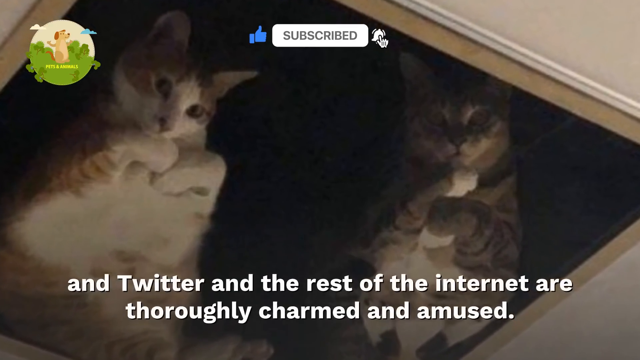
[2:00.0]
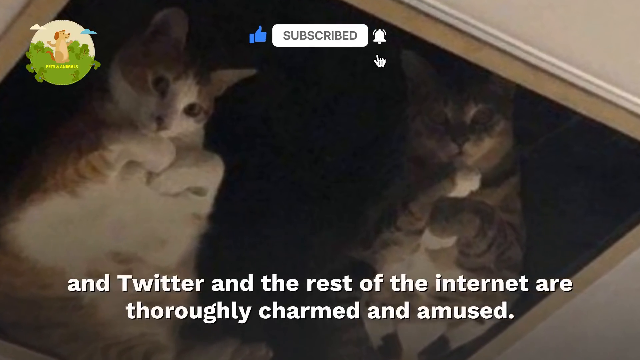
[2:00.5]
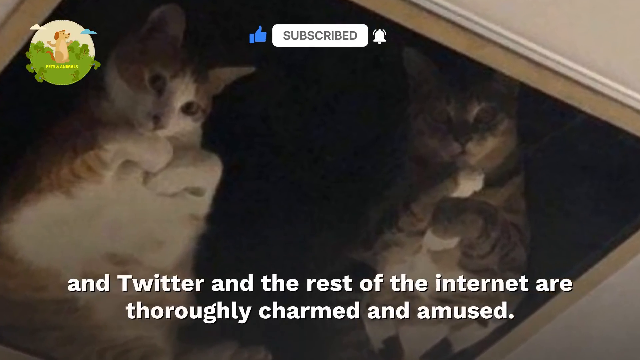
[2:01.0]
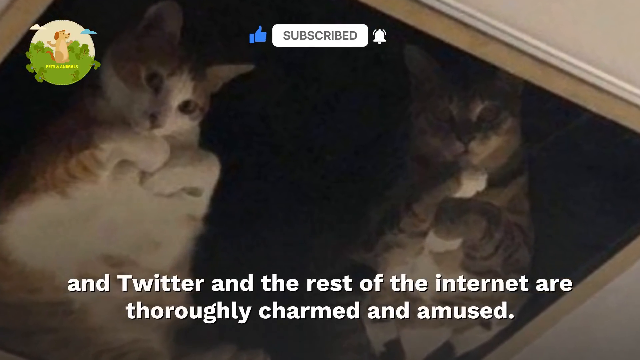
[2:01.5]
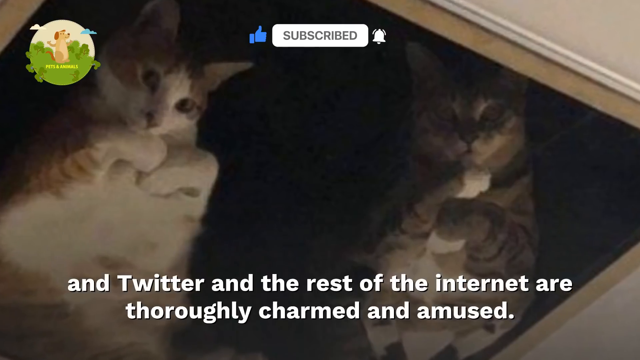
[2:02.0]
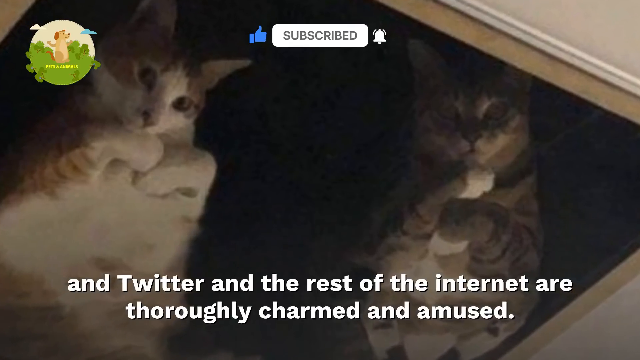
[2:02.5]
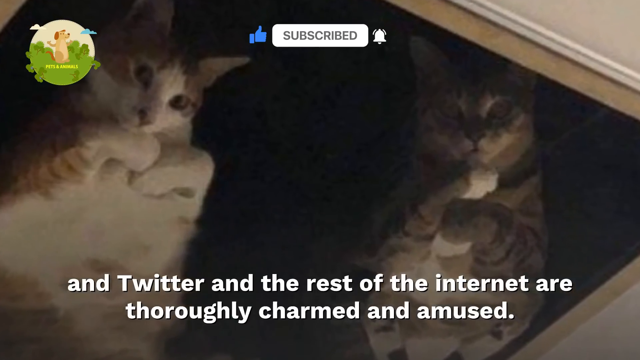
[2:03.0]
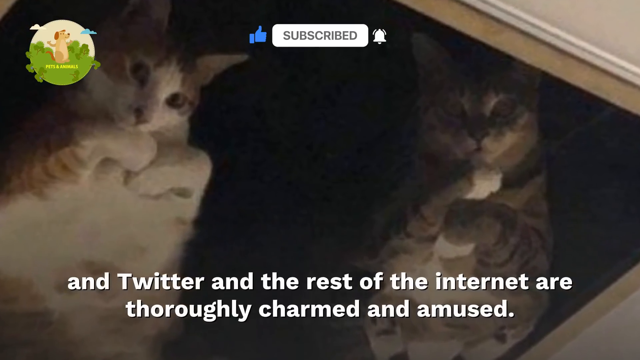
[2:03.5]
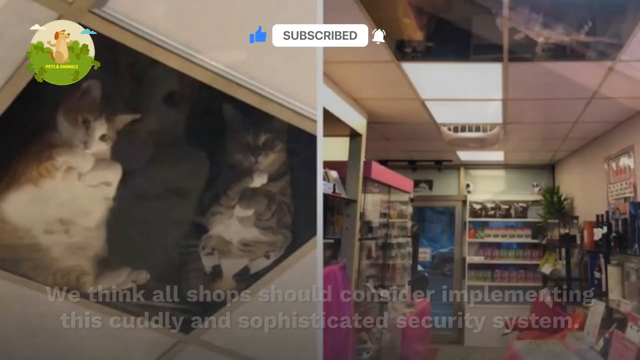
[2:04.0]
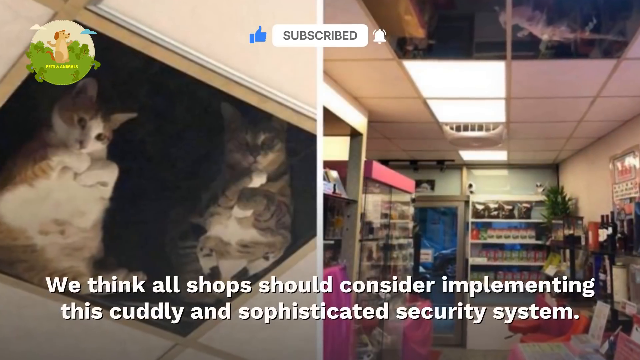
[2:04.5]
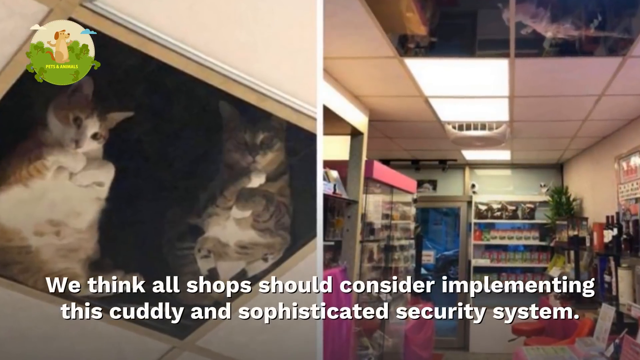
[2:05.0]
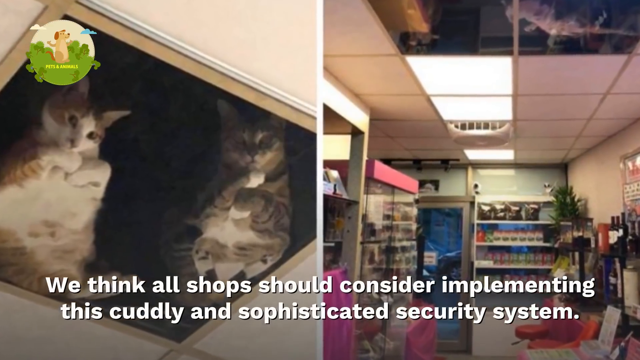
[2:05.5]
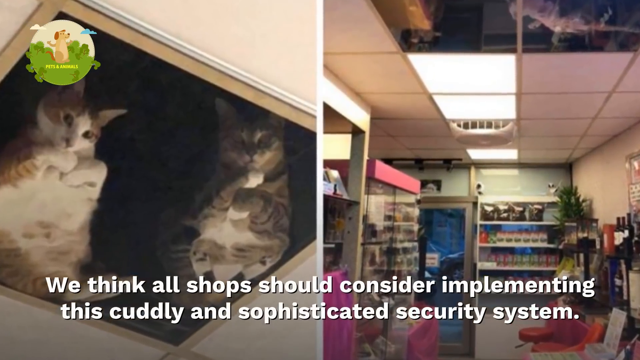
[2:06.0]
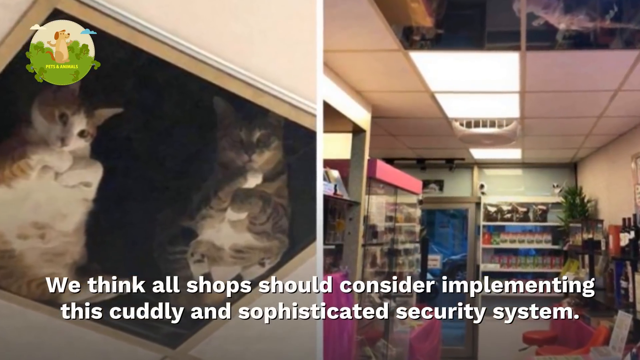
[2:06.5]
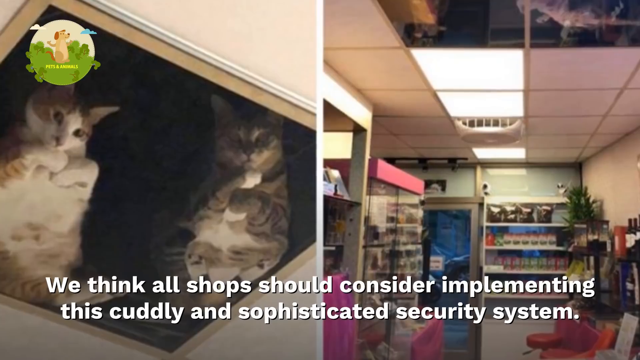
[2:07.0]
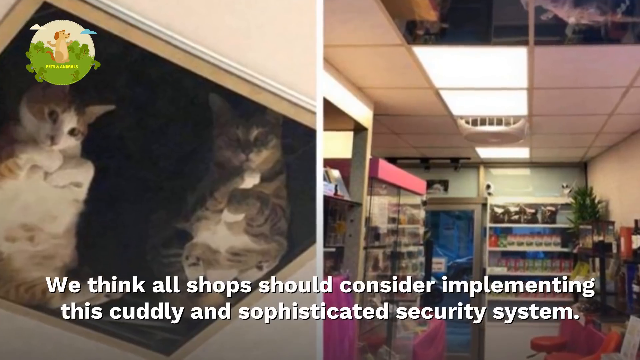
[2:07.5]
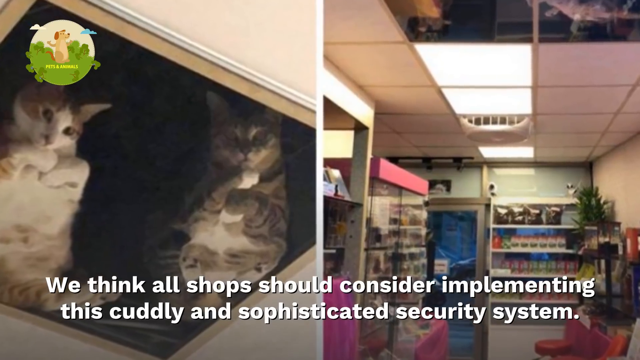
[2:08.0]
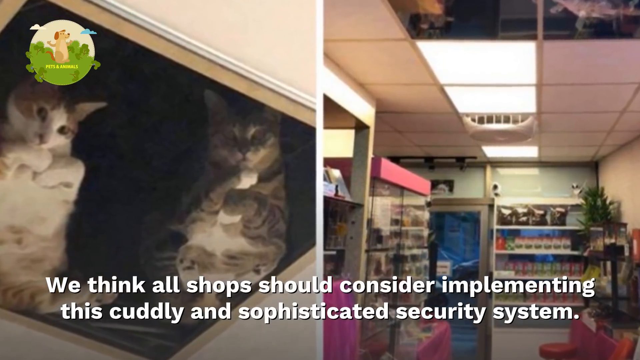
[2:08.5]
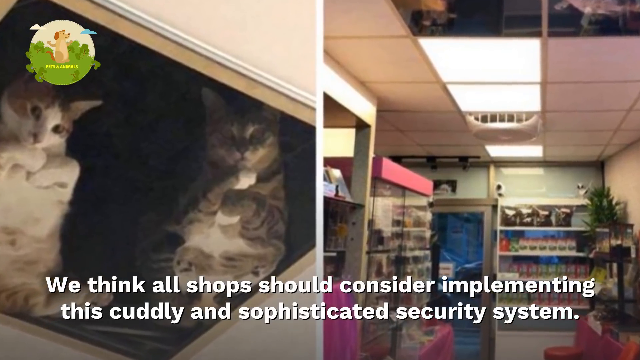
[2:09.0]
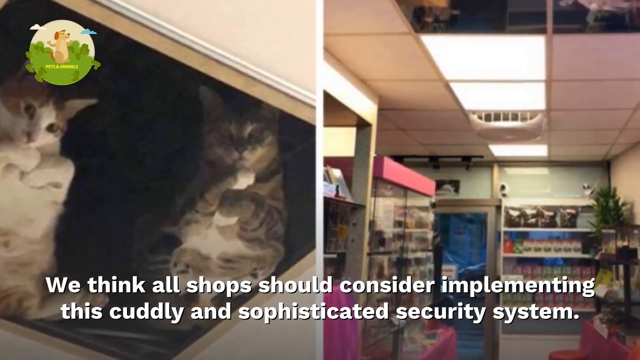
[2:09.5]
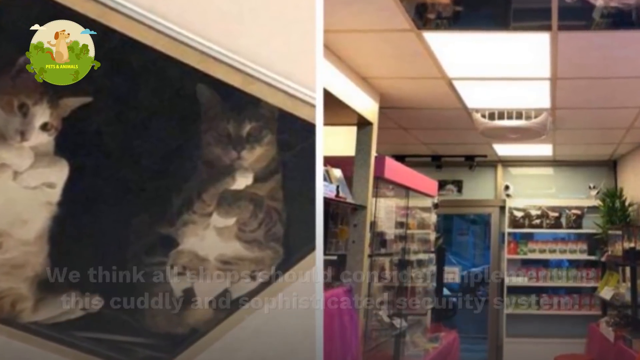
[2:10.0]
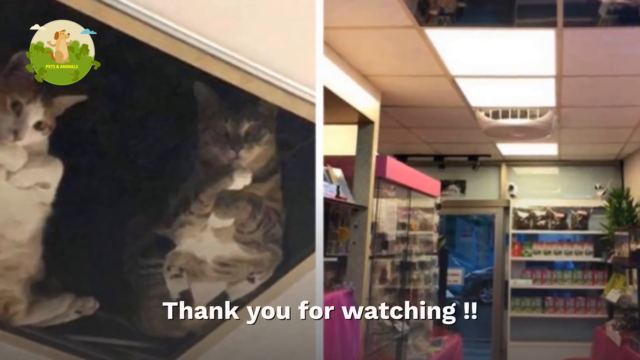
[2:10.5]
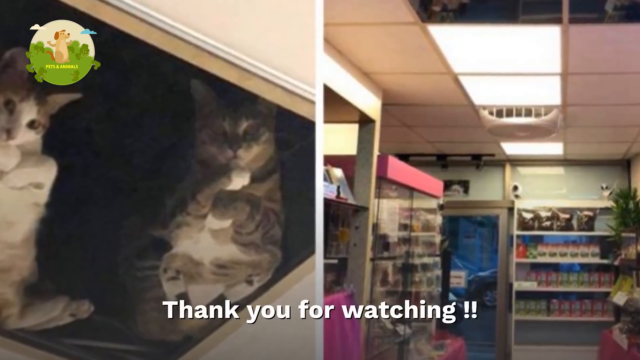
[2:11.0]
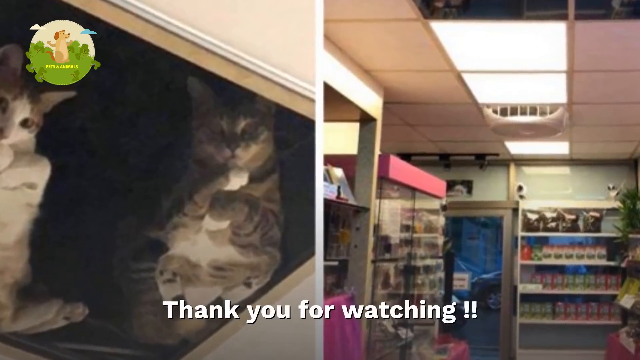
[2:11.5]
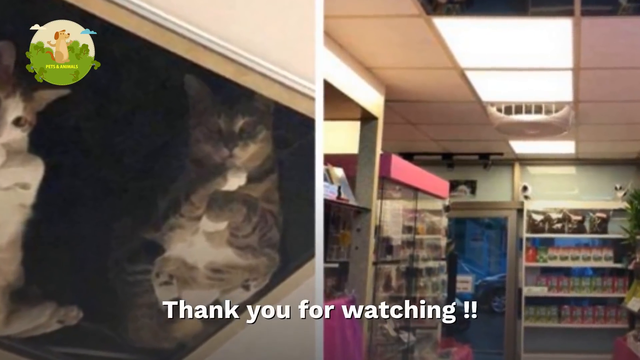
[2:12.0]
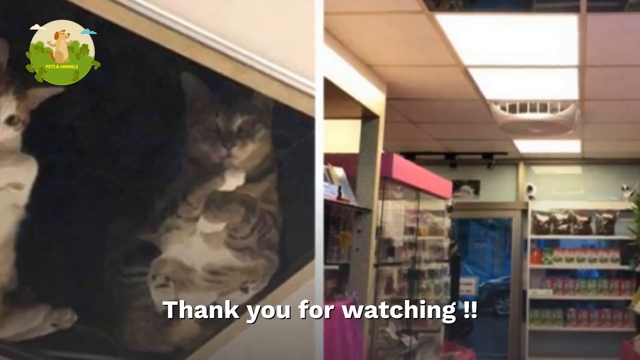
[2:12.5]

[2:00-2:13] Cats are up in ceiling tiles made of clear glass, so the cats can look down into the store below and customers can look up and see them. Two cats are in the picture at first, with the text "and Twitter and the rest of the internet are thoroughly charmed and amused." The view zooms in on those cats. Then the shop is shown on the right, where ceiling tiles are missing and some cats walk up there. The text says "we think all shops should consider implementing cuddly and sophisticated security systems." Finally it says "thank you for watching" with two exclamation points at the end.